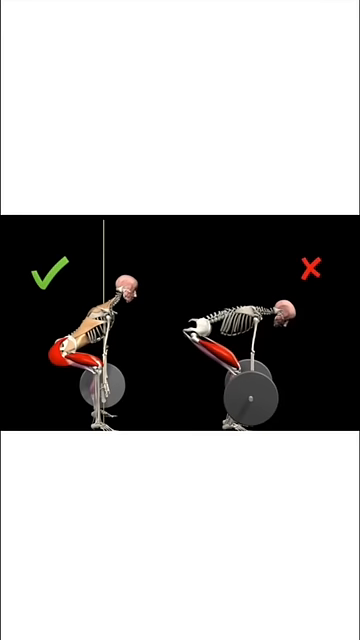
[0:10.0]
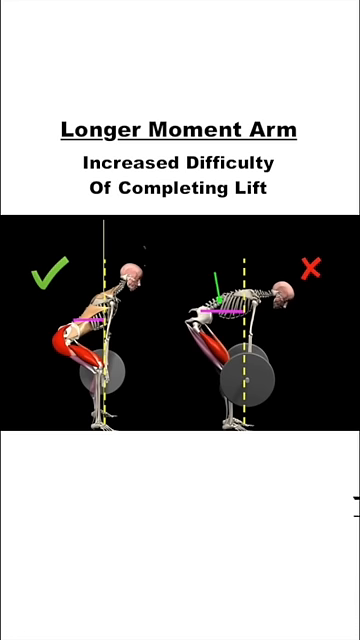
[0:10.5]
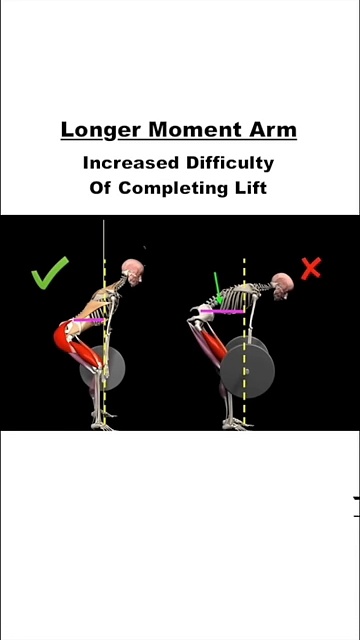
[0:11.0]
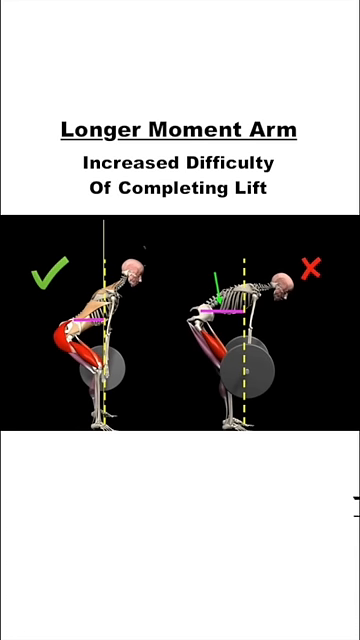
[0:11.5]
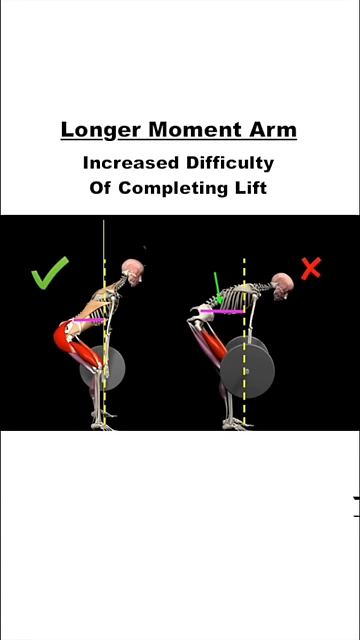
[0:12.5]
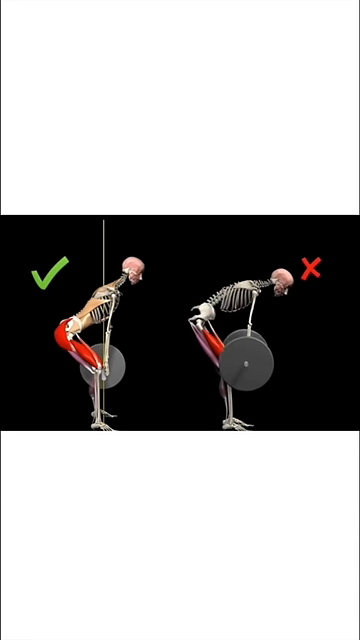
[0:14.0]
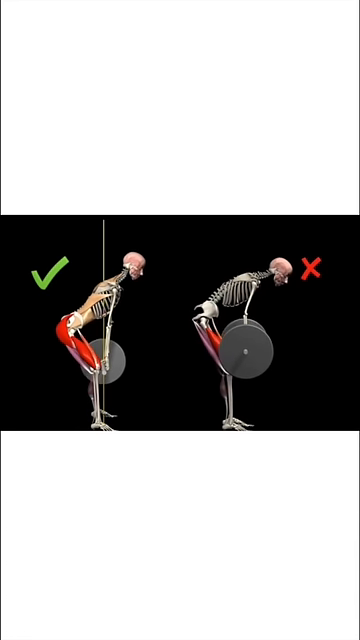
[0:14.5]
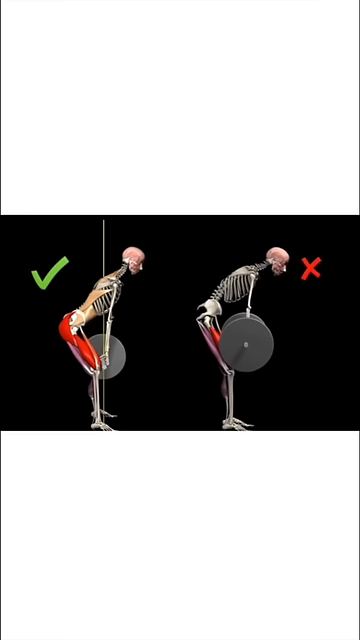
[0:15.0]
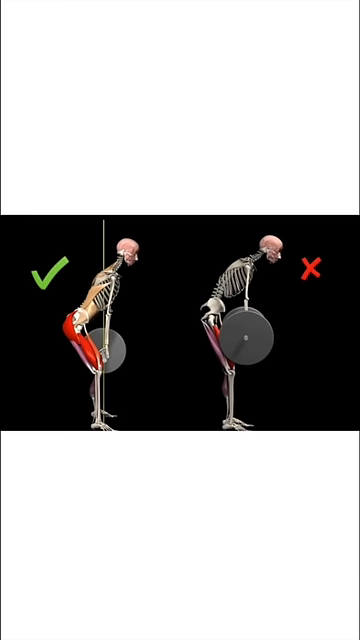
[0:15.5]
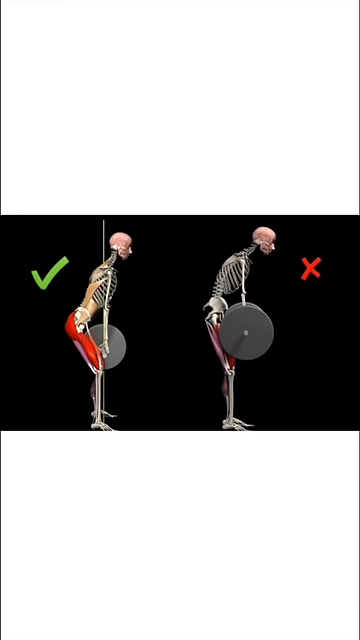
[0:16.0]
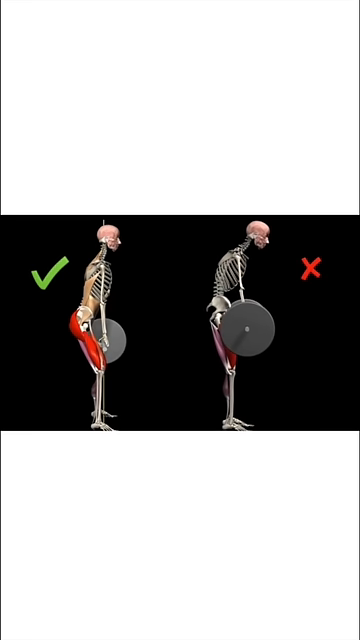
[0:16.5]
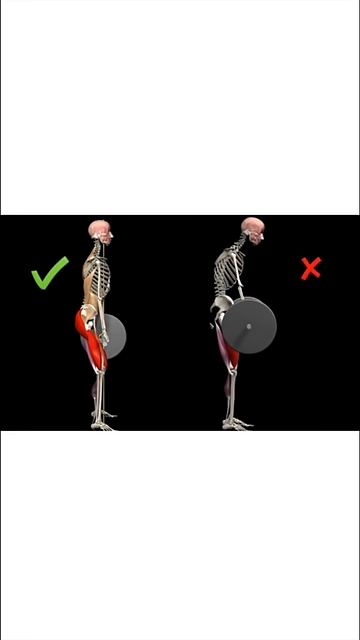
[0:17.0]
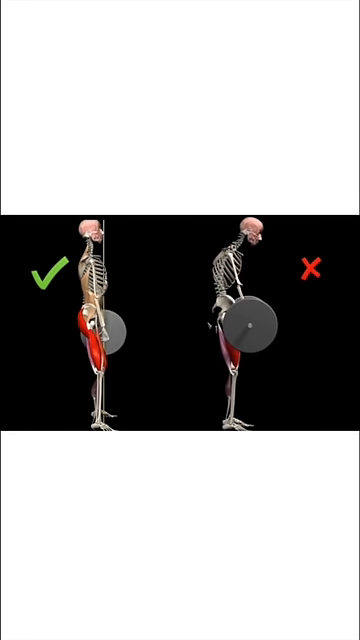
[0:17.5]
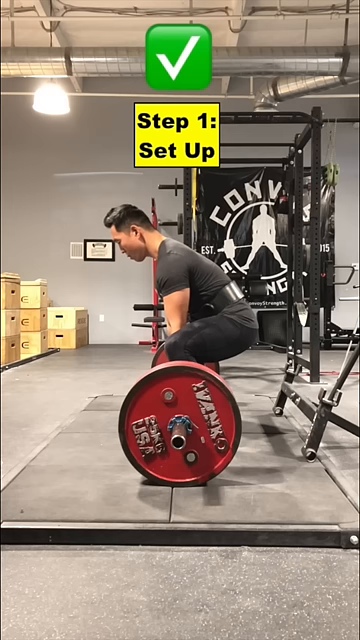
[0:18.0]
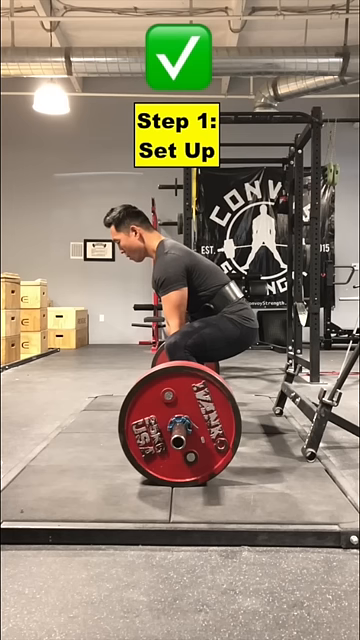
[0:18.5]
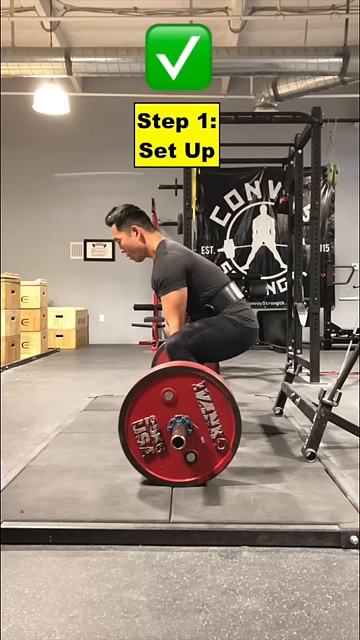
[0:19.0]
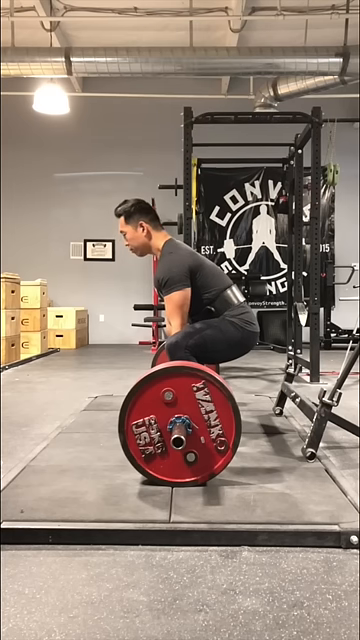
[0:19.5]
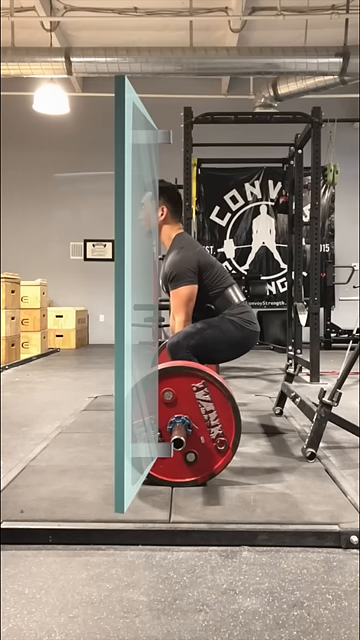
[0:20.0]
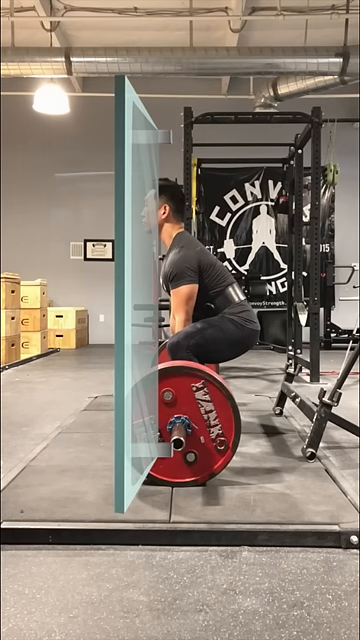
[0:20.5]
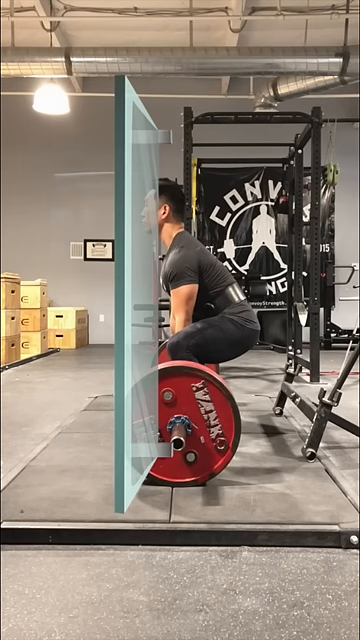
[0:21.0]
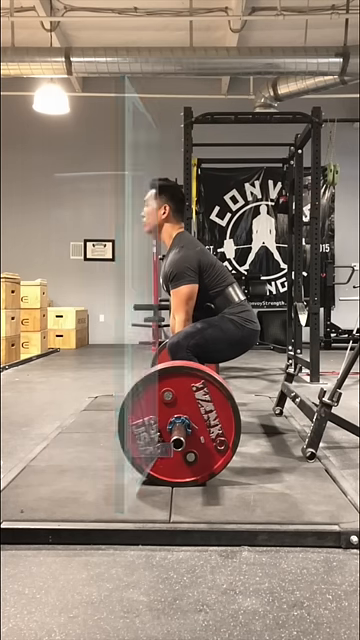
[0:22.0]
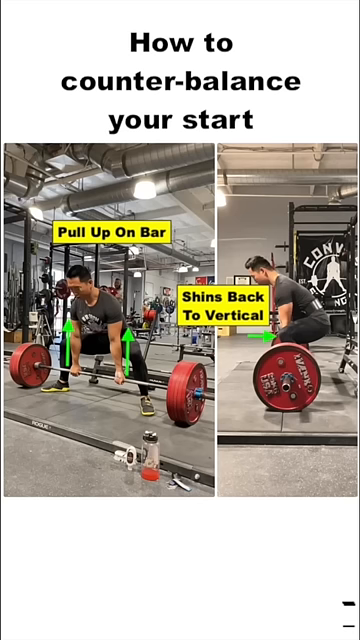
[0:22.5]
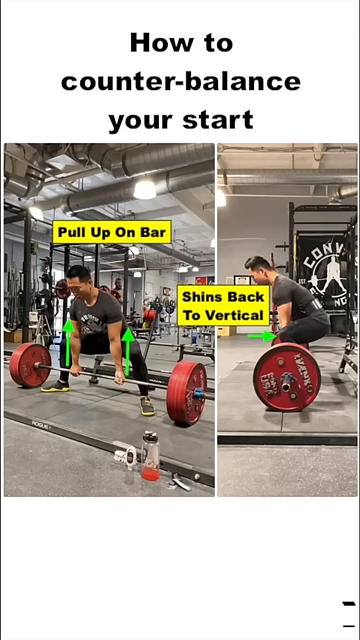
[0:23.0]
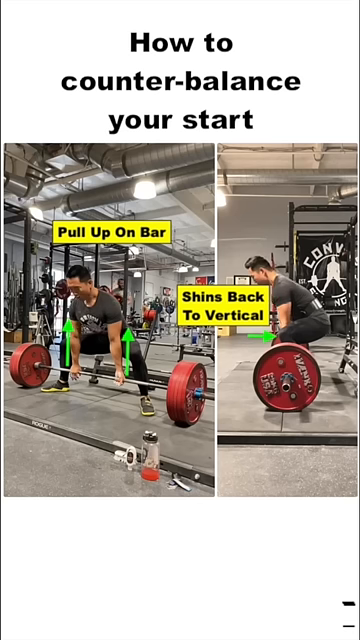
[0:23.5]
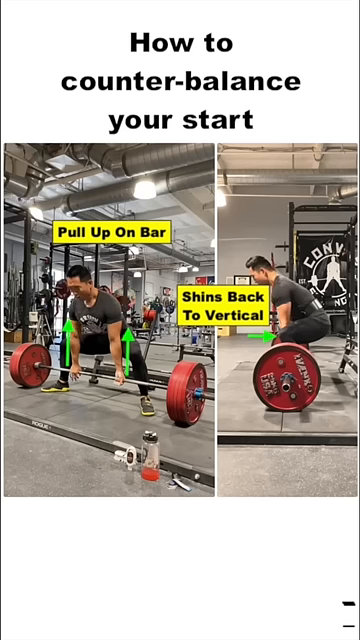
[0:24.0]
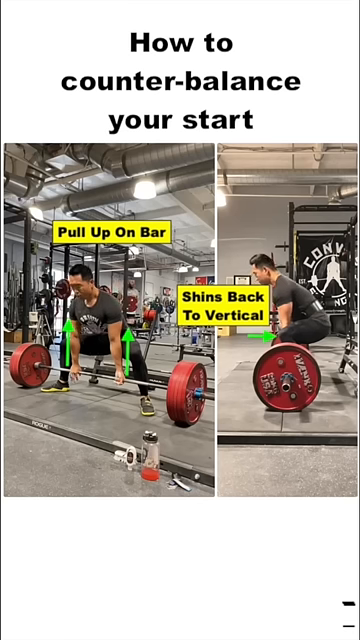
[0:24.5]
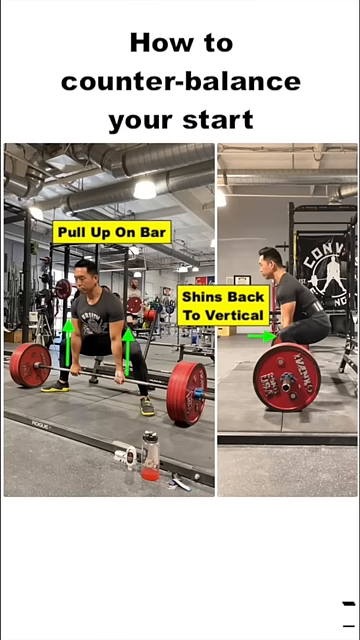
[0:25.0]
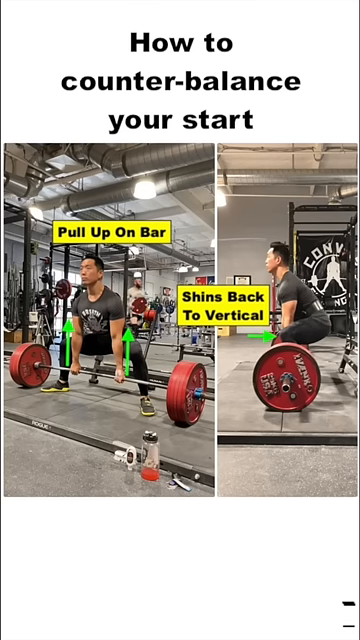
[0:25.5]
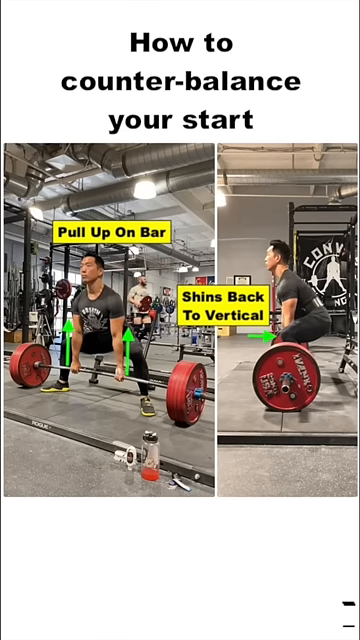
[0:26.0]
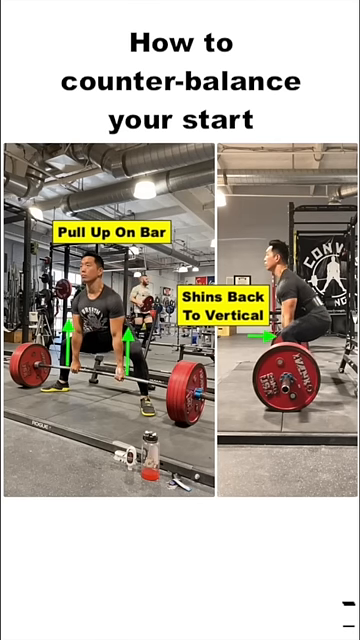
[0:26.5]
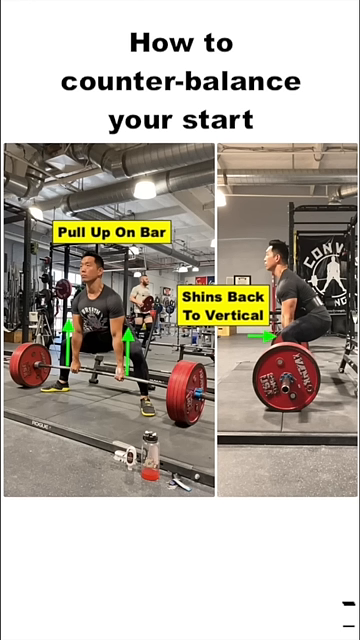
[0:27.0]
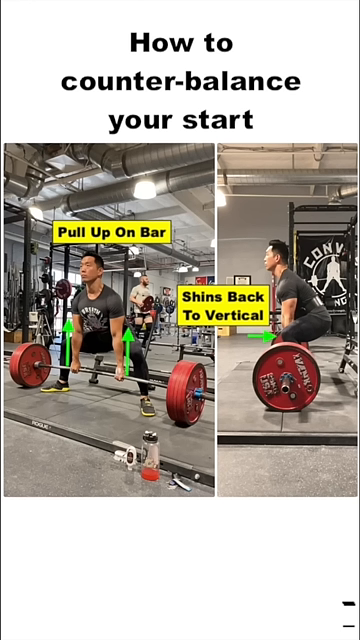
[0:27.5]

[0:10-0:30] A side-by-side comparison shows an X-ray and a skeleton with muscles, contrasting the right form and the wrong form. A man is then shown in side profile, displaying his form, body, legs and posture, followed by a back view showing how his back should be. His stance is very balanced. A title at the top reads "how to balance your start." The man pulls up on the bar with his arms straight, a balanced stance and a very straight posture, performing a balanced deadlift. Text on screen says "pull up on the bar" and "shins back to vertical," showing the correct way to do a deadlift.